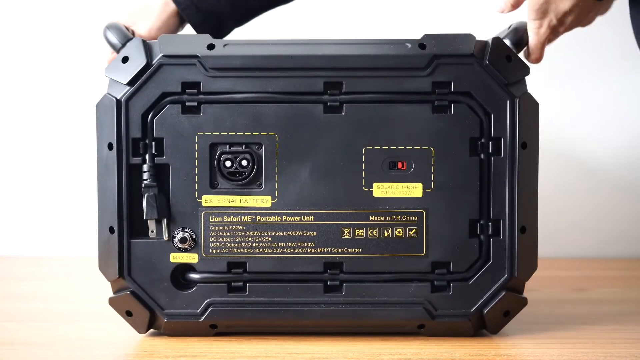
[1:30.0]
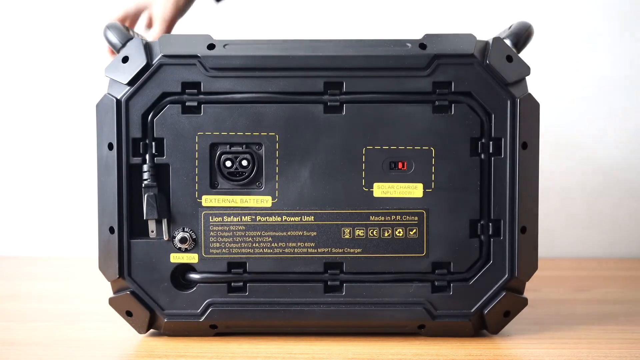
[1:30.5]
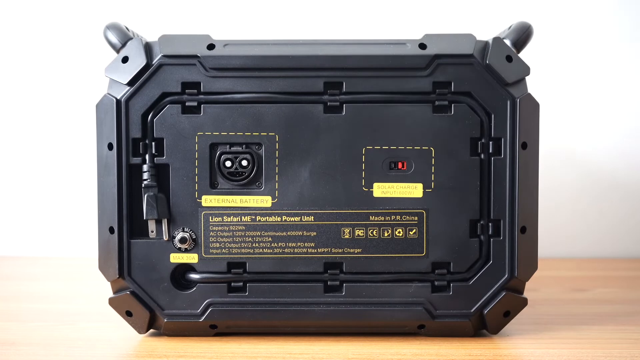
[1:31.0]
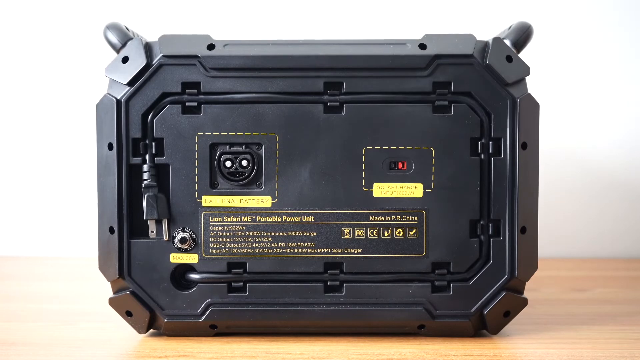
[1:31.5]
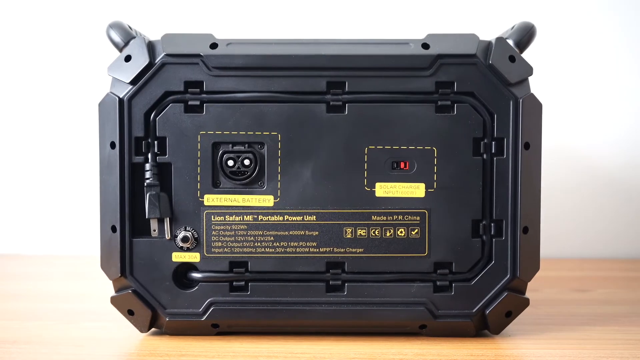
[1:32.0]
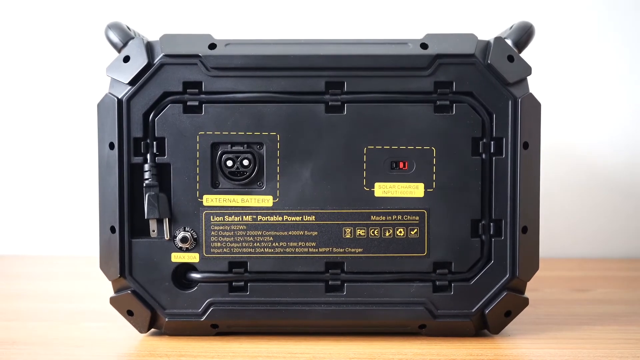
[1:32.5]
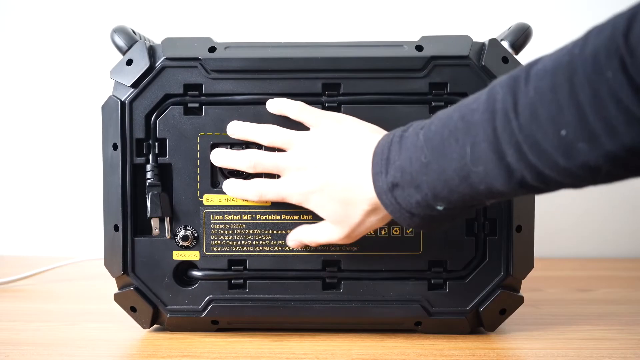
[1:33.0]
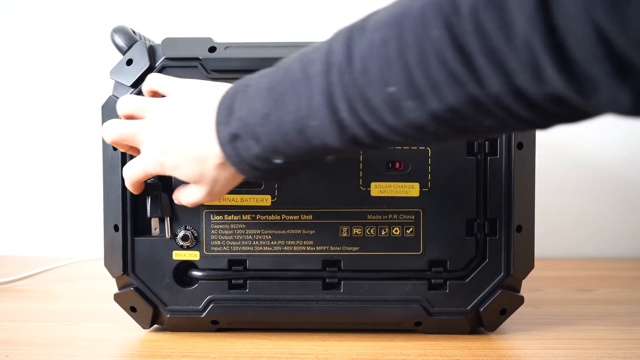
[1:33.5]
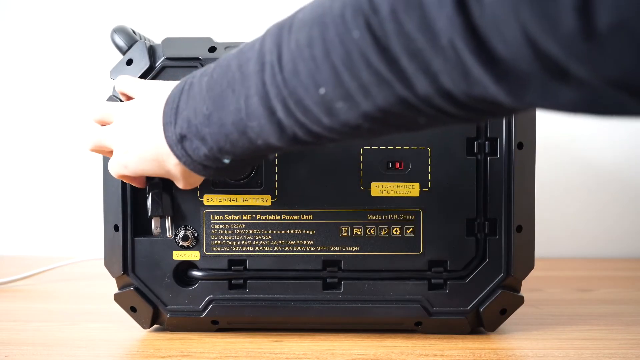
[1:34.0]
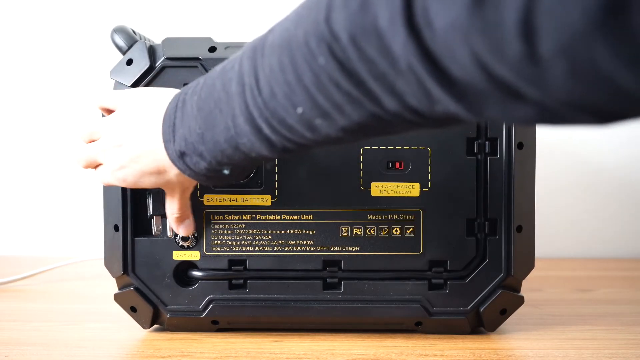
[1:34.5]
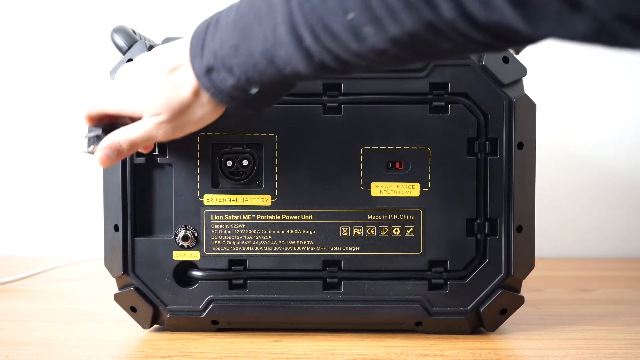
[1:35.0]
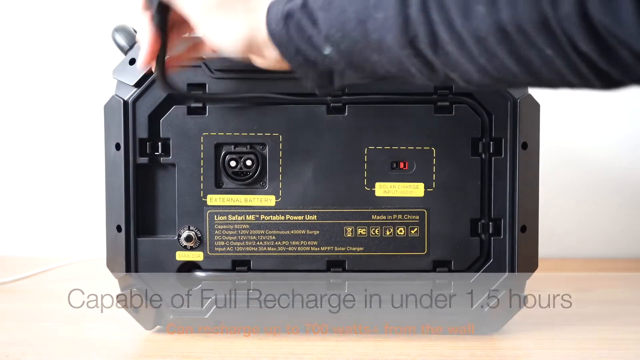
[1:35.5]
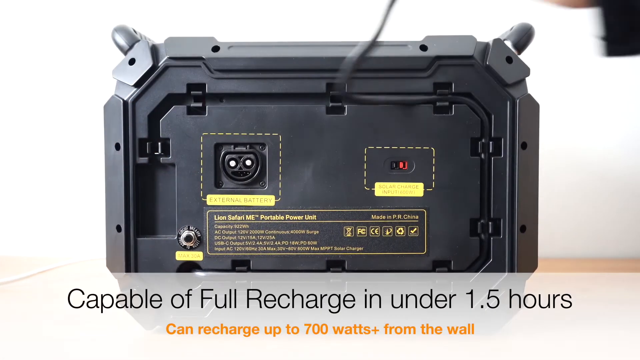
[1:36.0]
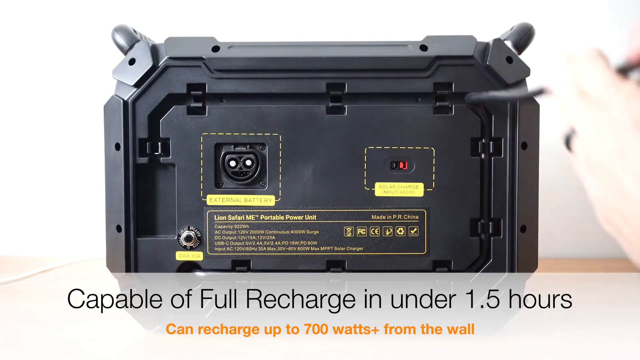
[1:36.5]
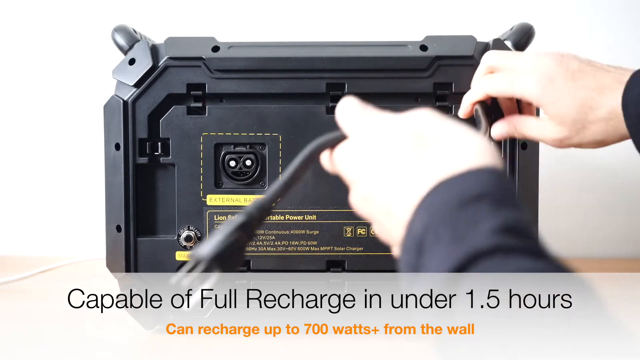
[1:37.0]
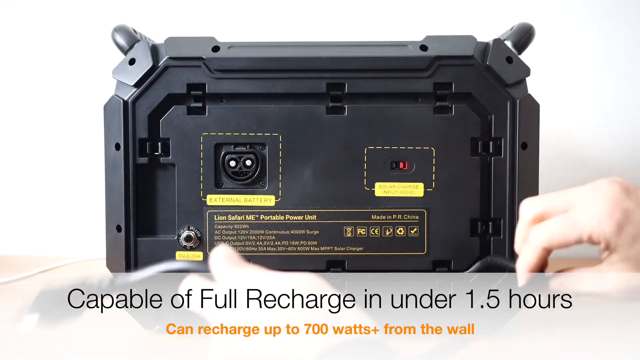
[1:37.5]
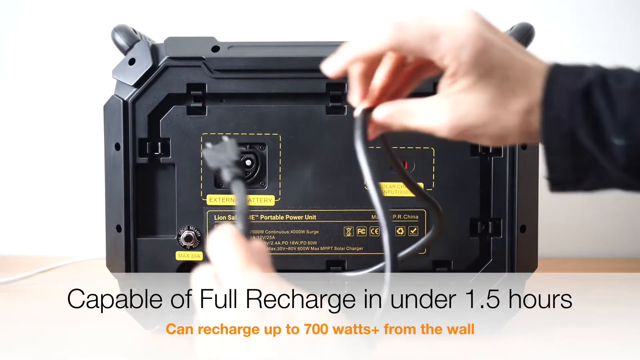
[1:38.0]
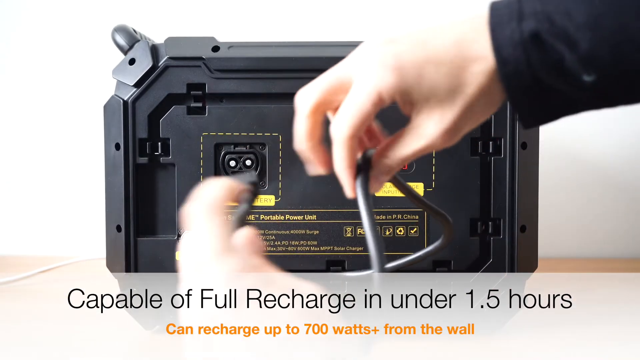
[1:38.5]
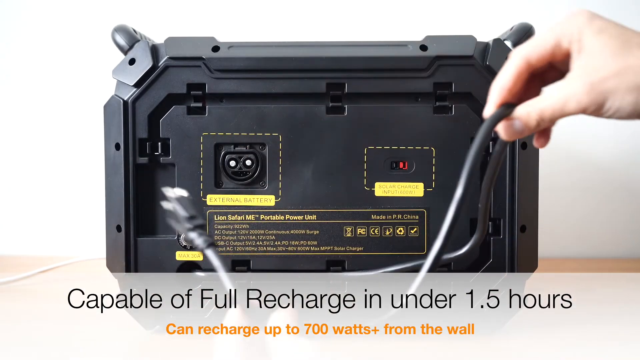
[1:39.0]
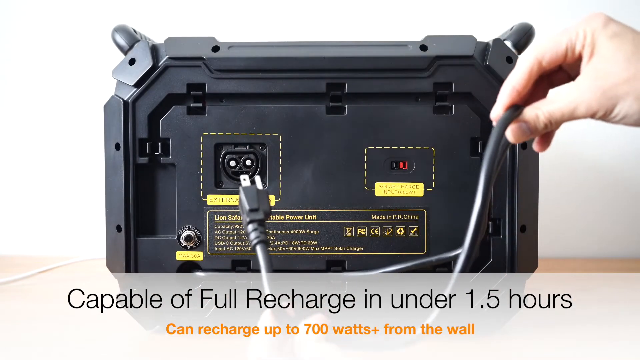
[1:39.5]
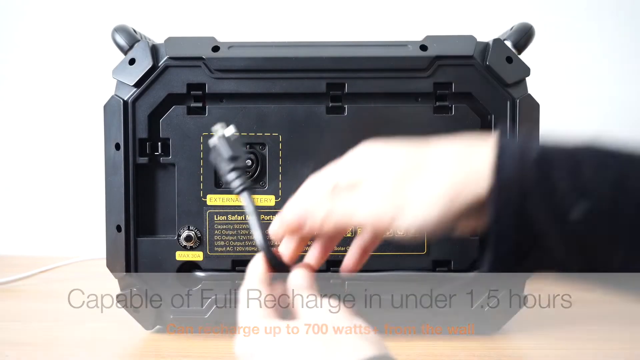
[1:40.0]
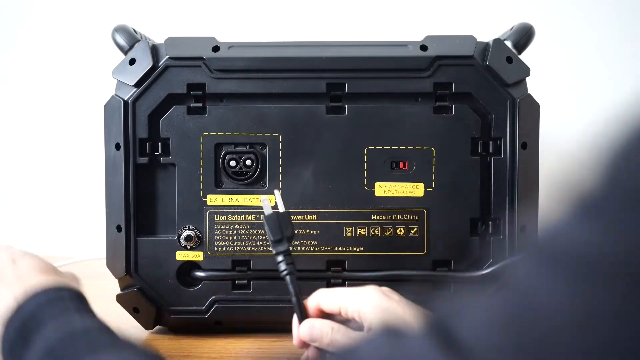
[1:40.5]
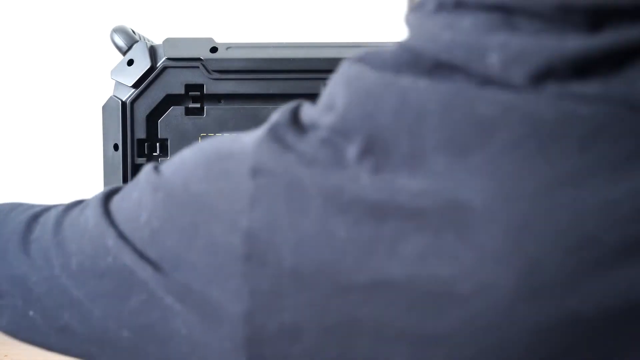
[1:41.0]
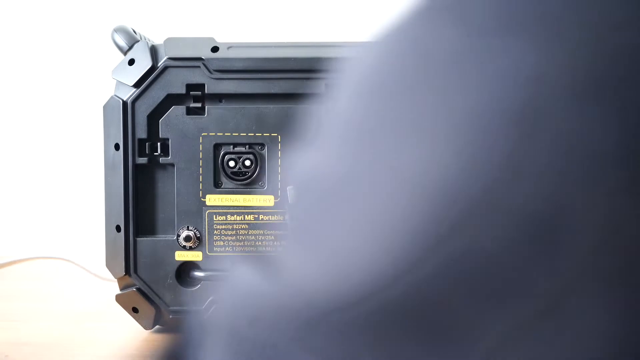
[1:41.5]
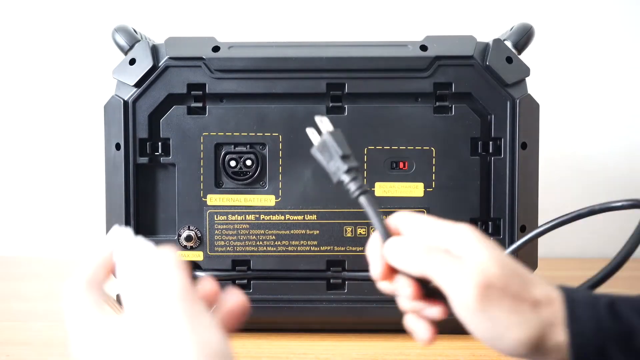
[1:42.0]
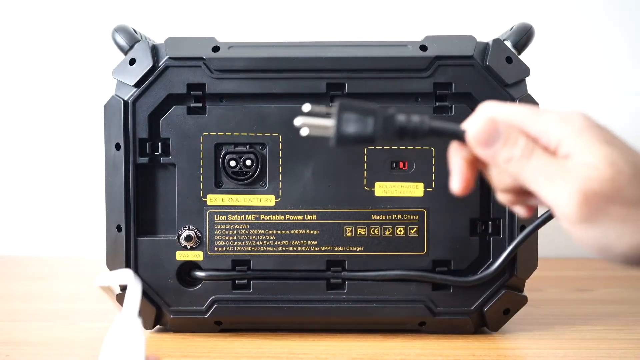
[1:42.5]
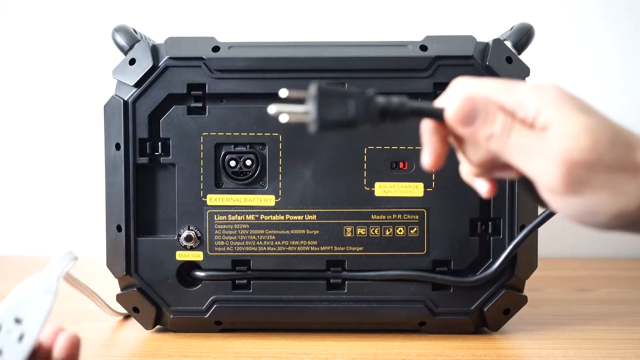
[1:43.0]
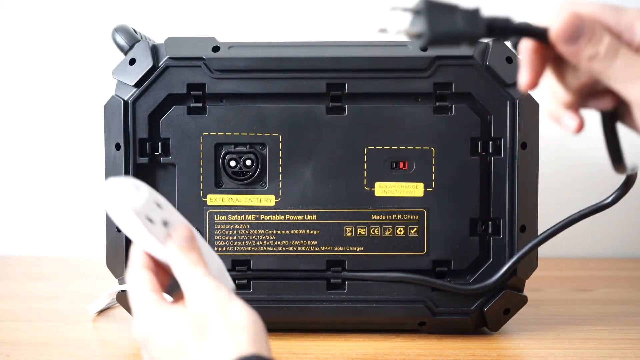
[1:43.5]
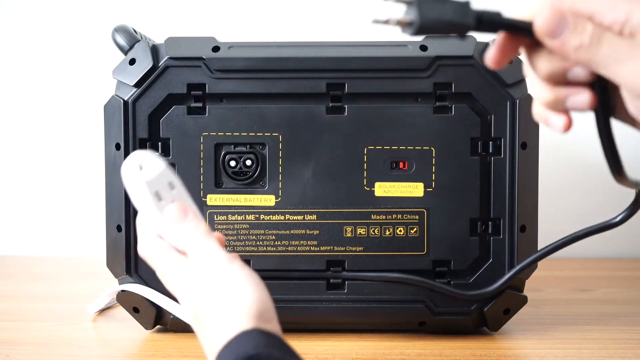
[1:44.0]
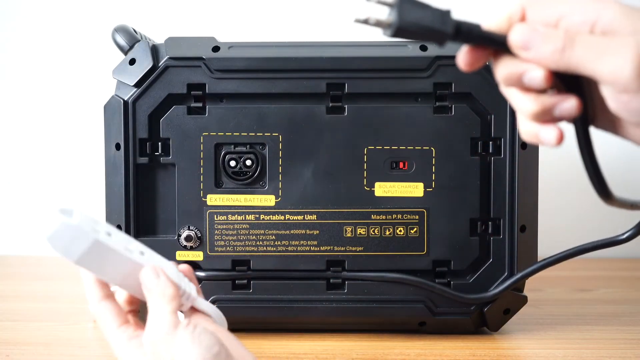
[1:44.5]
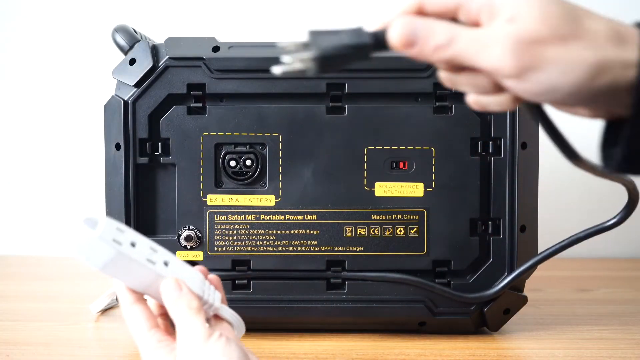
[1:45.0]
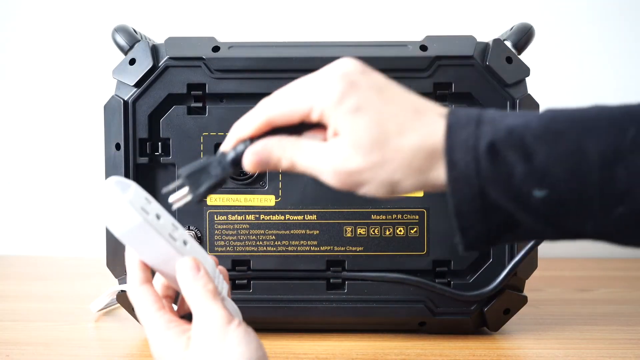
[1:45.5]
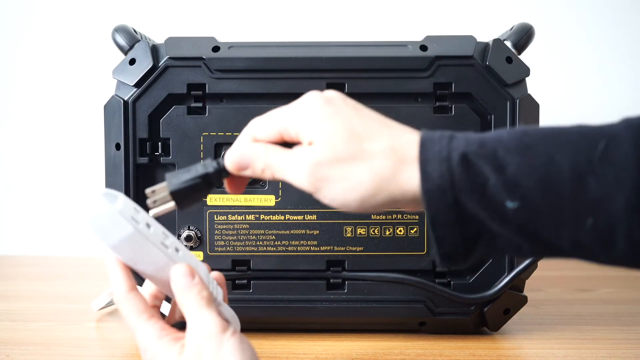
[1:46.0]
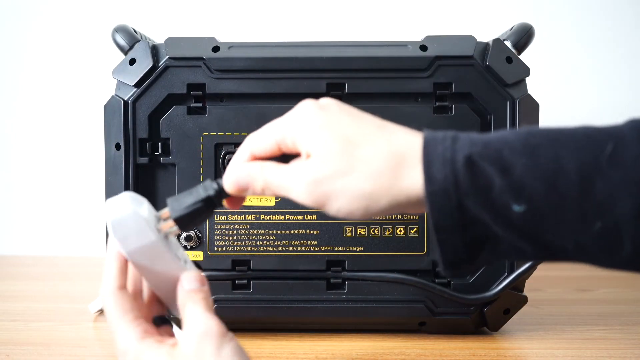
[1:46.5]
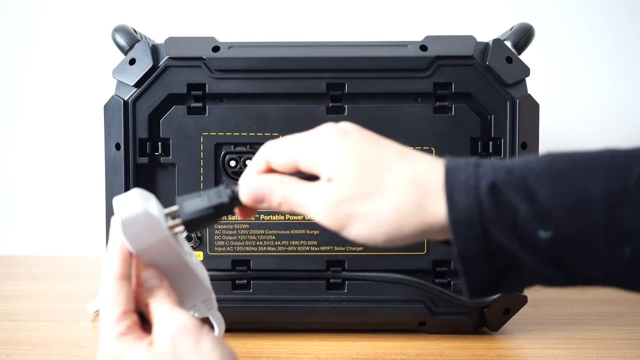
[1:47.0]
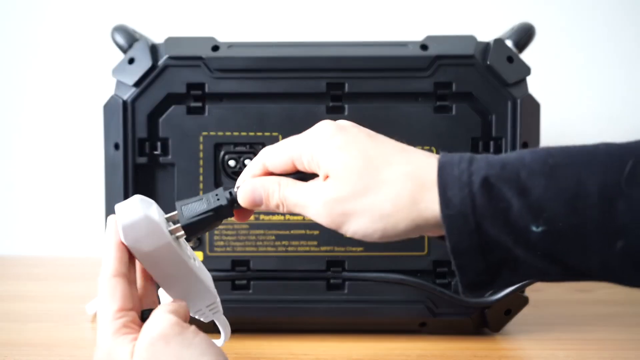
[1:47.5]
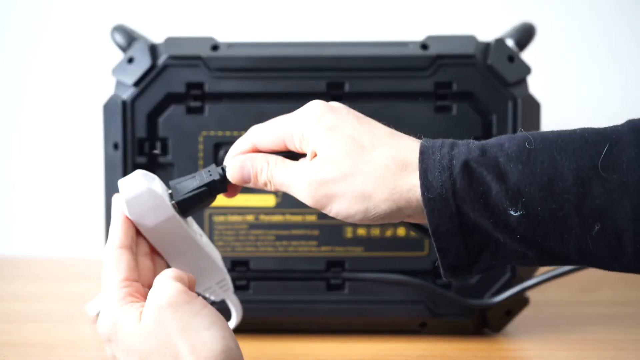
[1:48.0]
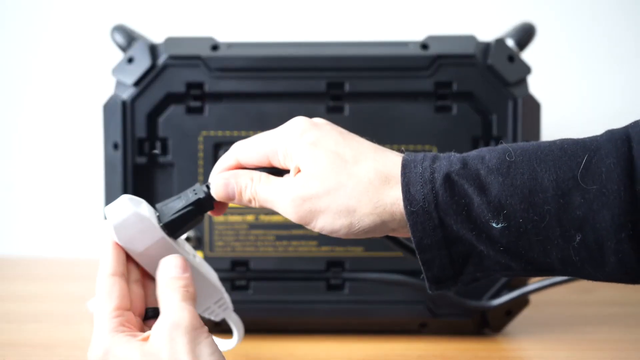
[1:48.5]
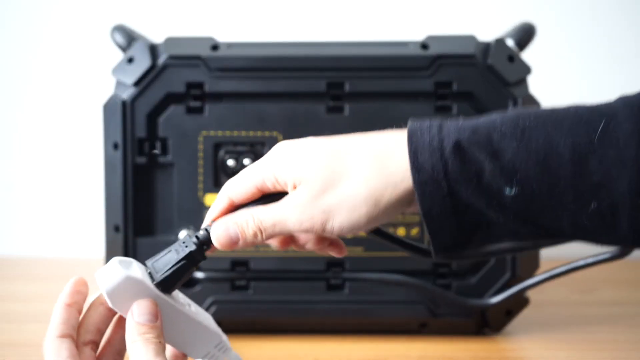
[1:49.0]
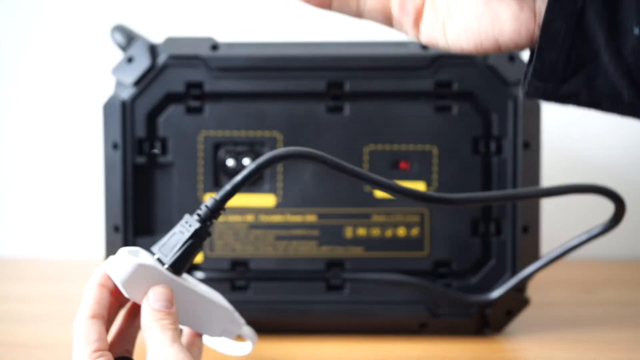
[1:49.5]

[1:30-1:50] An electronic device has its cord neatly organized in slots so it wraps around the back of the device. An area says "external battery," and text says "Lion Safari Mi portable power unit made in China," along with information about capacity, AC output, DC output, USB-C output, input AC, and more. The man puts his hand on the external battery area, then grabs the cord and unwraps it out the back. A banner at the bottom says "capable of full recharge in under 1.5 hours. Can recharge up to 700 watts plus from the wall." He then grabs something else and plugs the device into a power source.